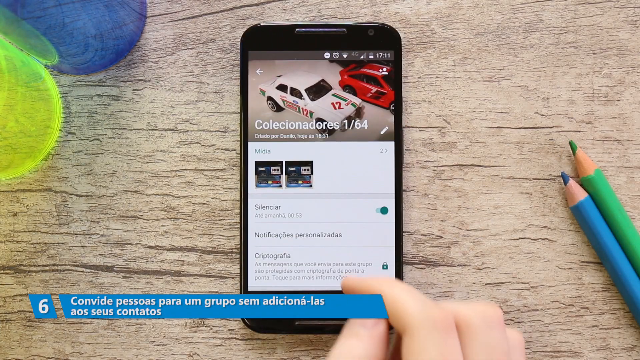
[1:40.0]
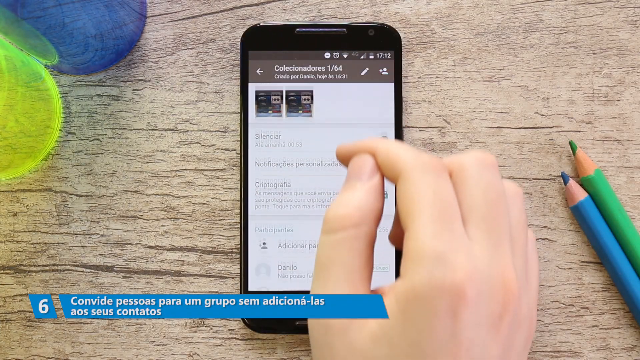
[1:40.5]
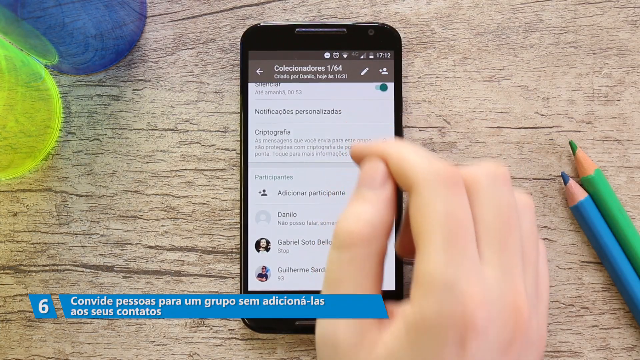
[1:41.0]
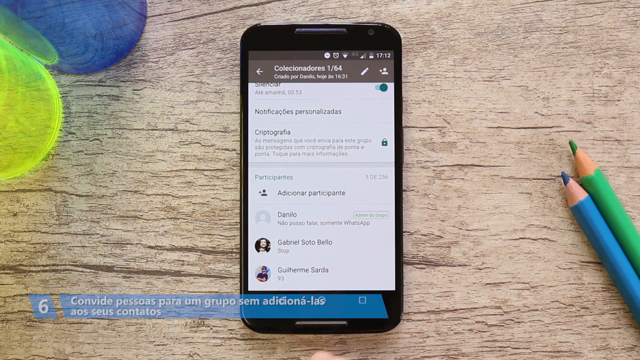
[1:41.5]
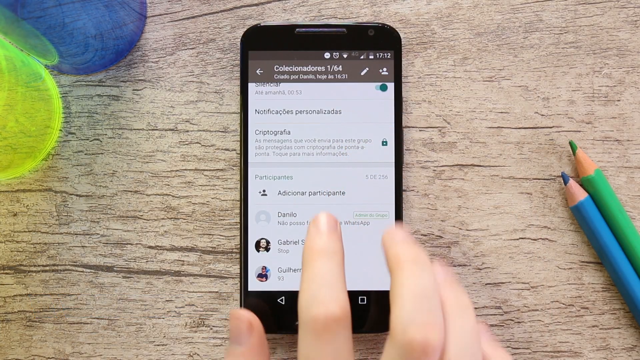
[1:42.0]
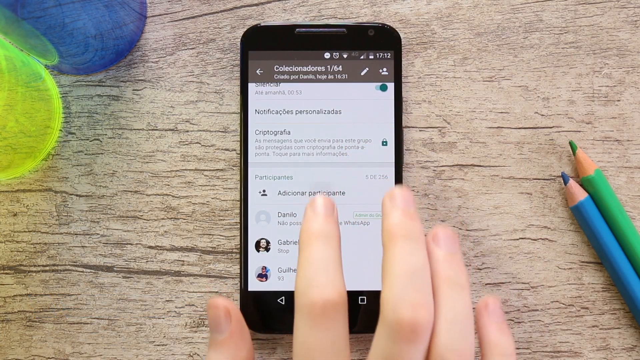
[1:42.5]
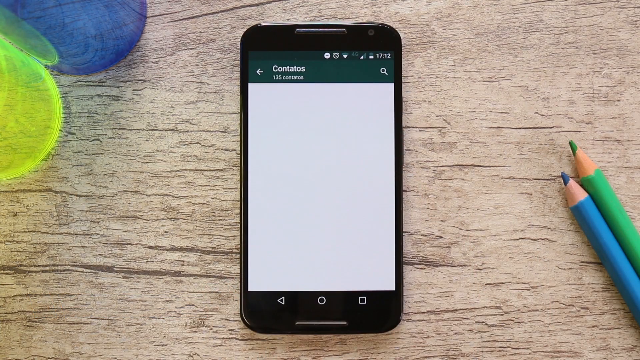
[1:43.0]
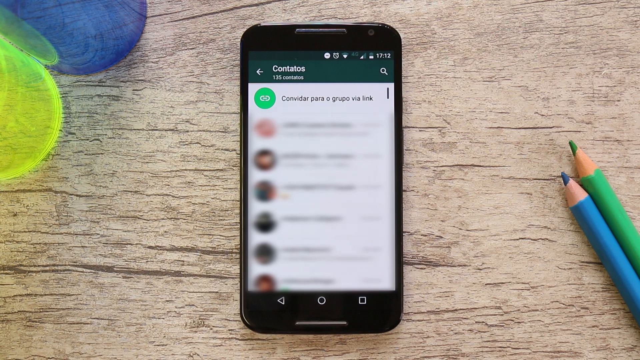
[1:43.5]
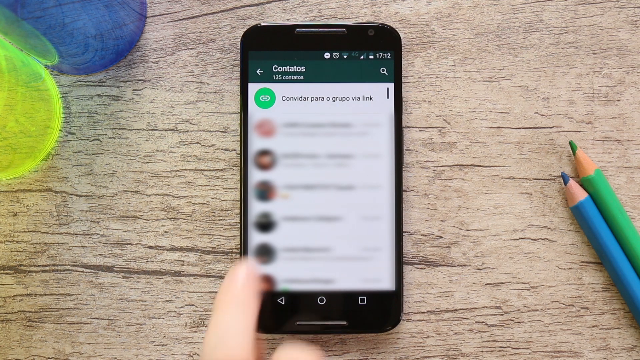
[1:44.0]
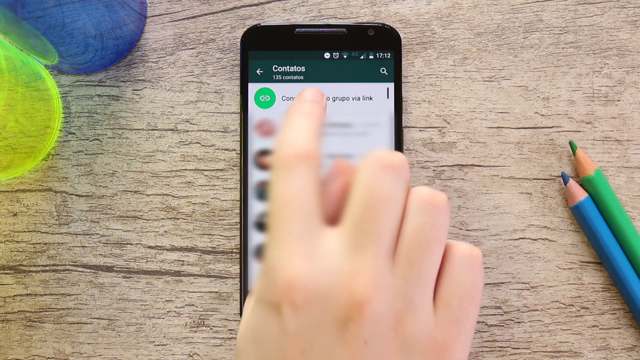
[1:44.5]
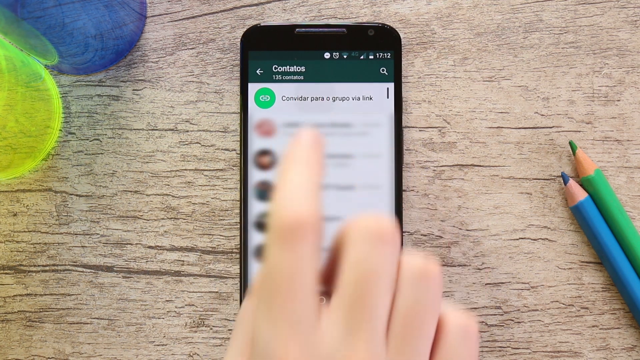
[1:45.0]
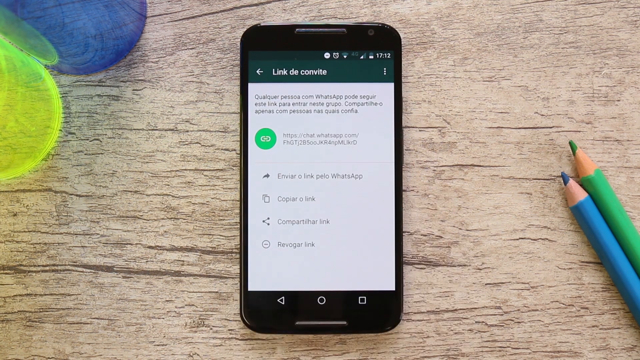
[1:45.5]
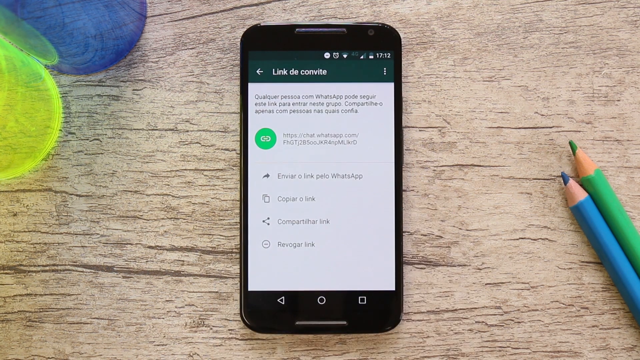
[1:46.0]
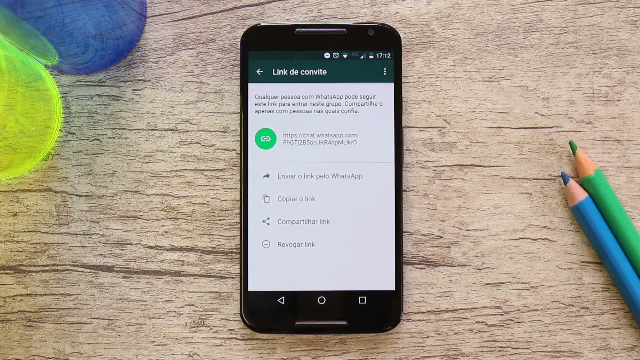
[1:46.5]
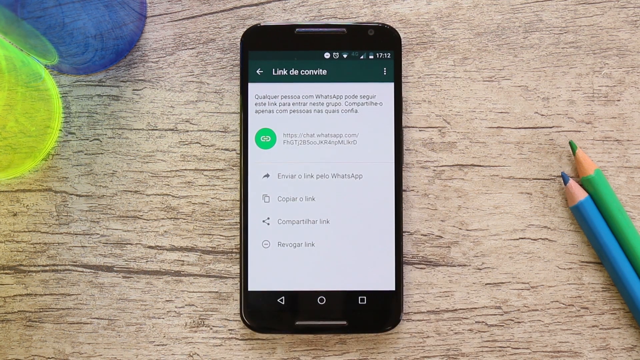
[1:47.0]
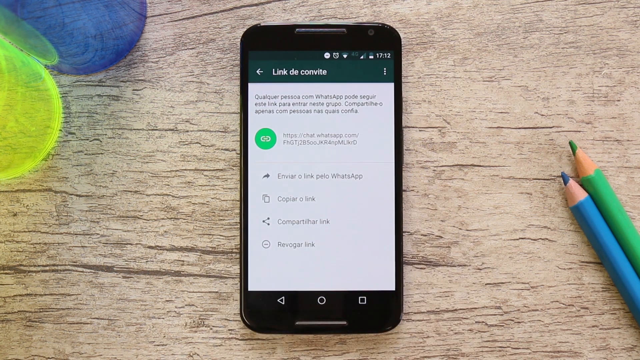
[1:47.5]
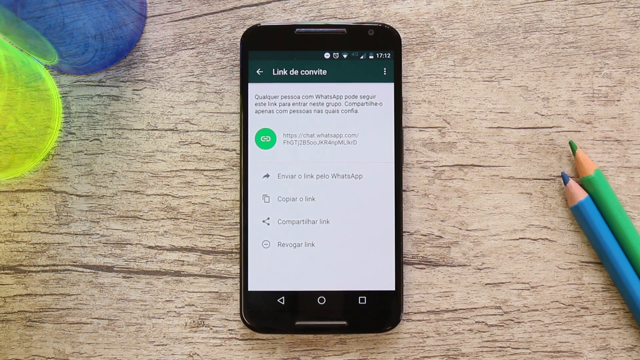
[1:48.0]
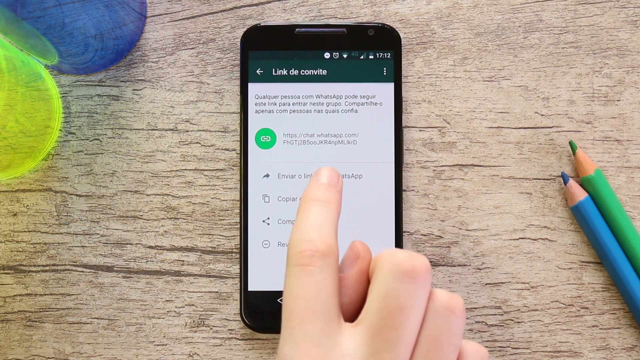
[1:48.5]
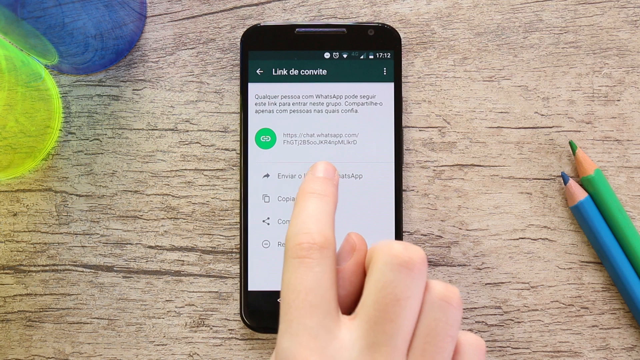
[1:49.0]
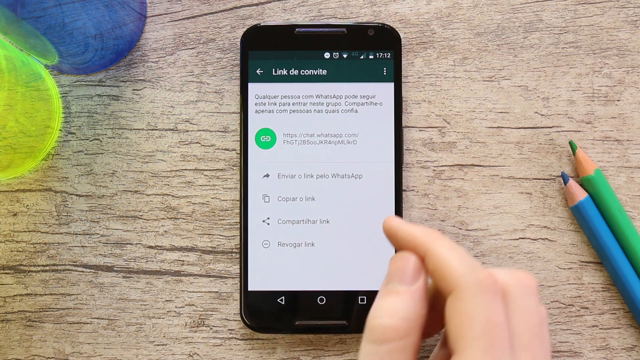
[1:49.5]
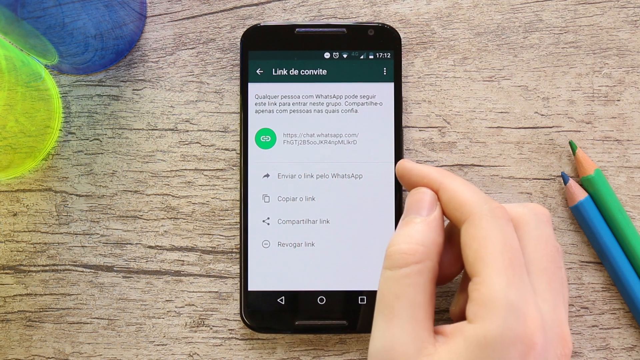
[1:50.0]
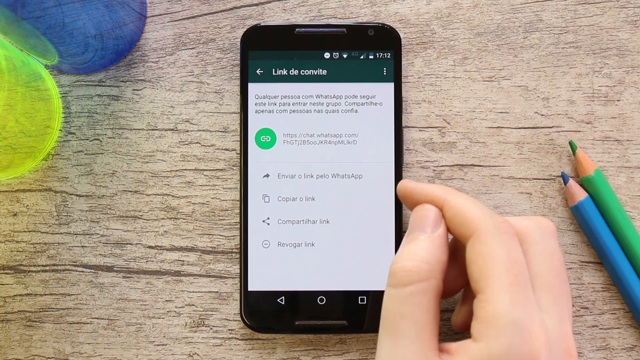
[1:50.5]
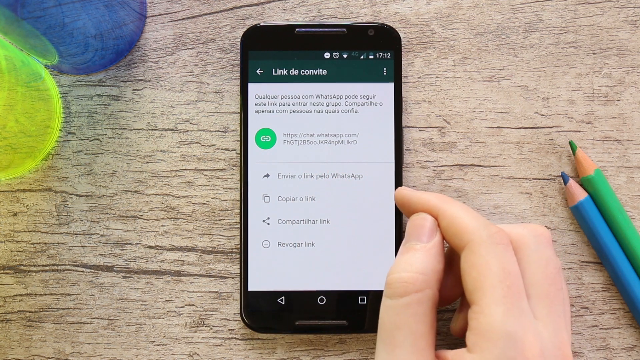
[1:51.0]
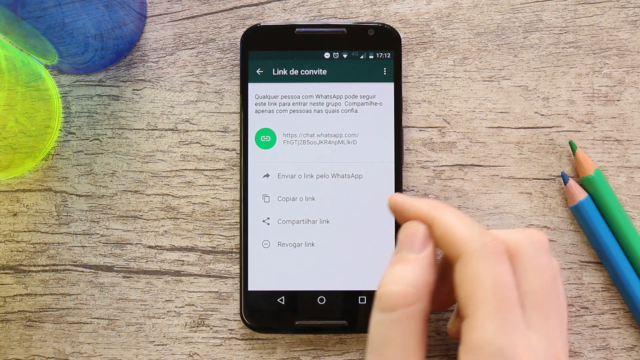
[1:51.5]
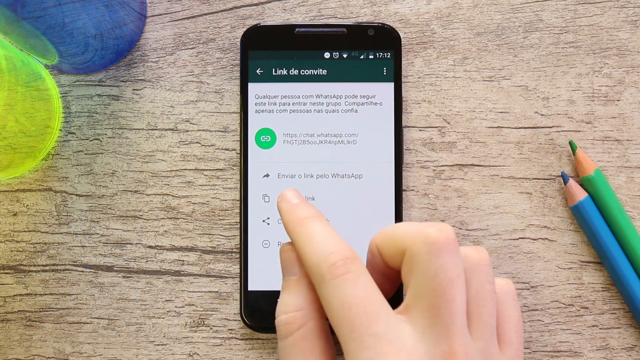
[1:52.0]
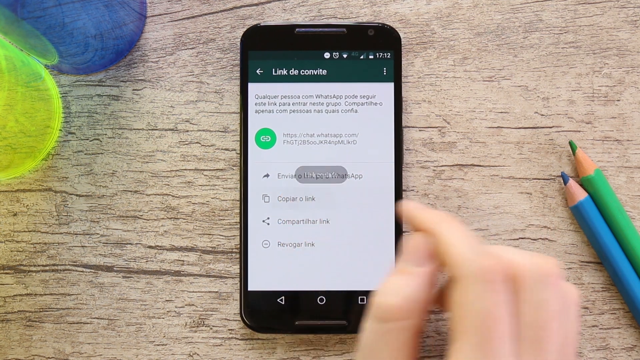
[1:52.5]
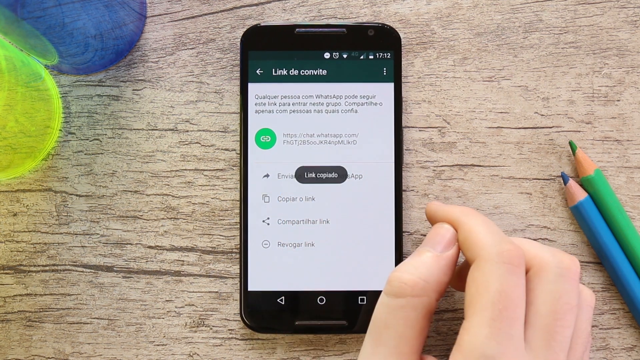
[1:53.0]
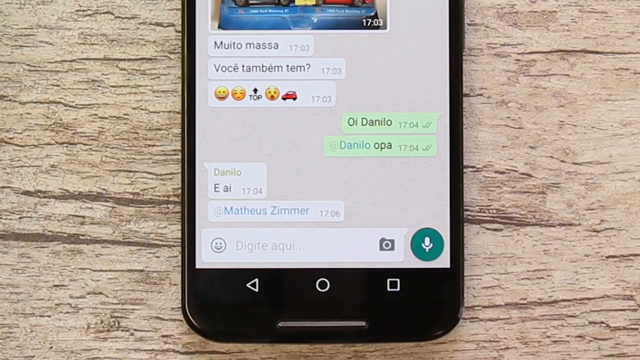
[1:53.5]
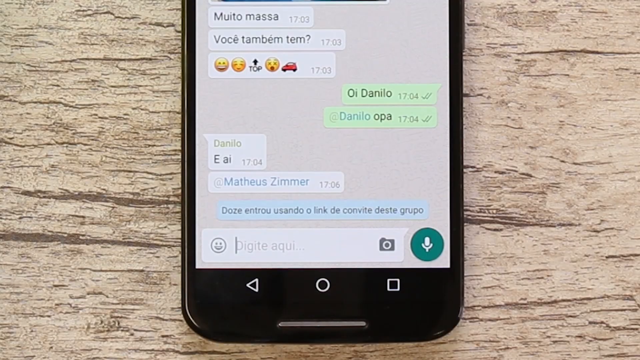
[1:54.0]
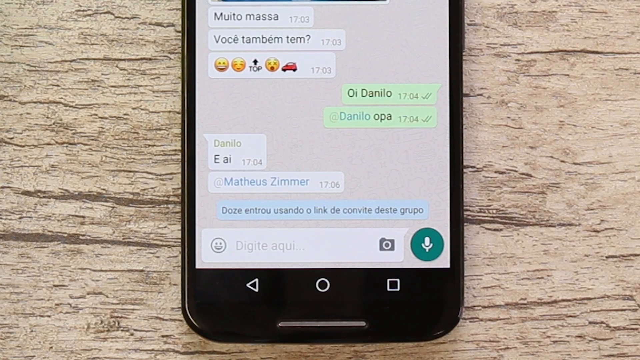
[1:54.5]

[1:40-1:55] The user scrolls up, taps on "contatos", and taps a link to invite a person. They tap an arrow and appear to copy the link. At the bottom left is the number 6 in a blue square. The person uses their right hand to tap the icons to invite someone with an invite link to WhatsApp, apparently sending it to Matthias Zimmer. The link icon is a green circle with a white chain link in it. The person apparently sends it to the person they were talking to from their contacts, and a URL link to the WhatsApp app appears.